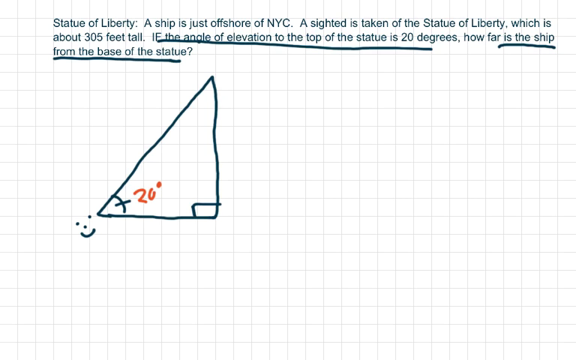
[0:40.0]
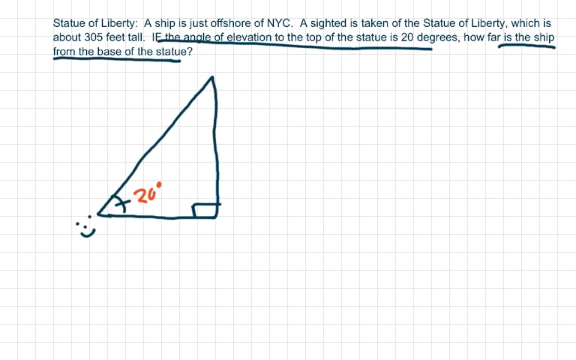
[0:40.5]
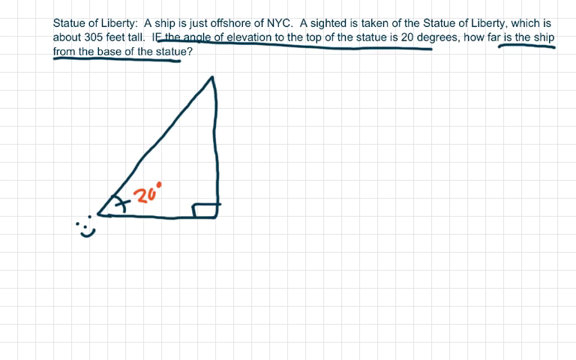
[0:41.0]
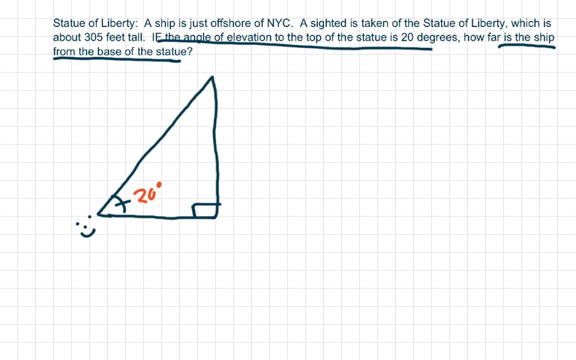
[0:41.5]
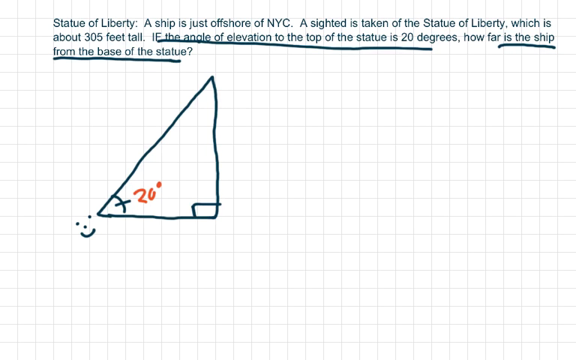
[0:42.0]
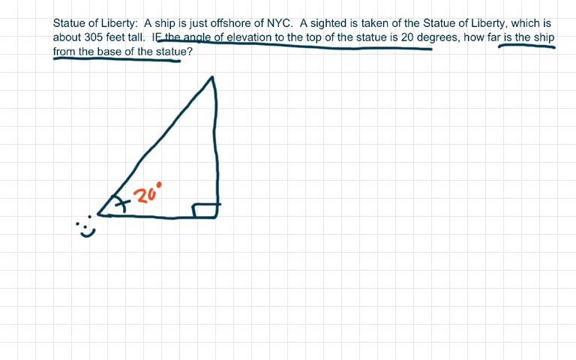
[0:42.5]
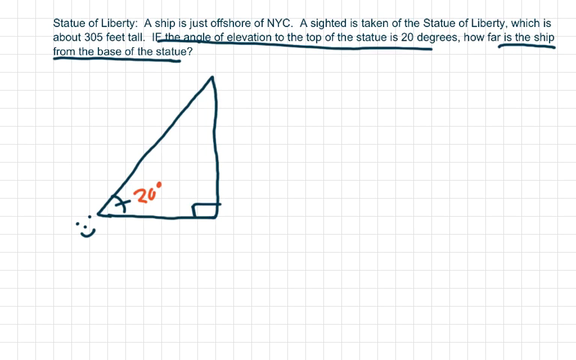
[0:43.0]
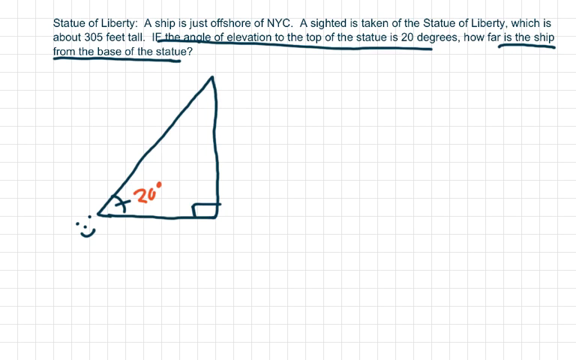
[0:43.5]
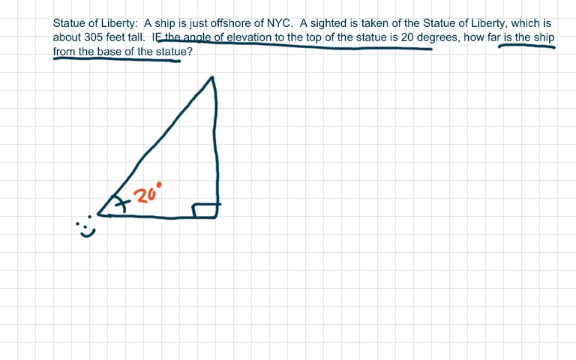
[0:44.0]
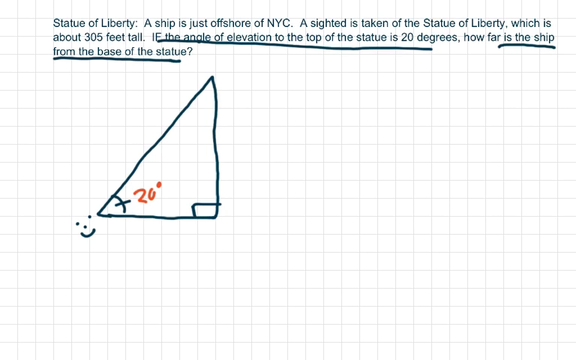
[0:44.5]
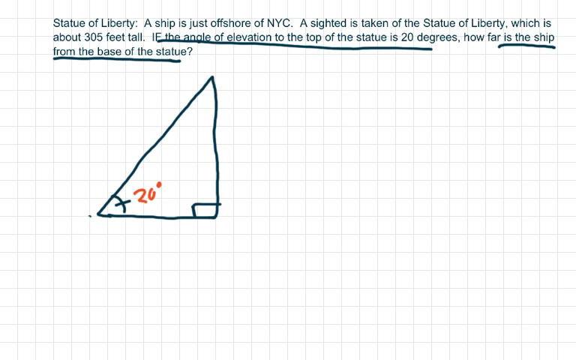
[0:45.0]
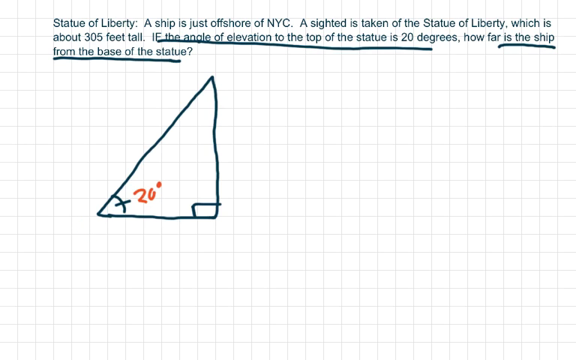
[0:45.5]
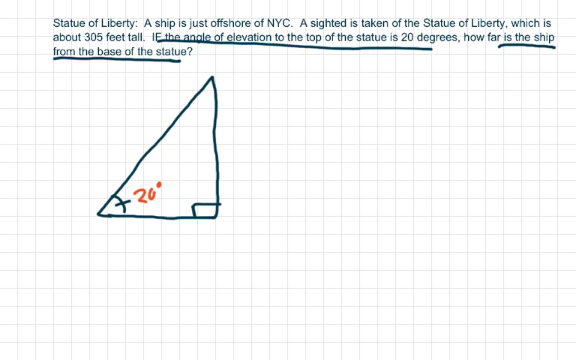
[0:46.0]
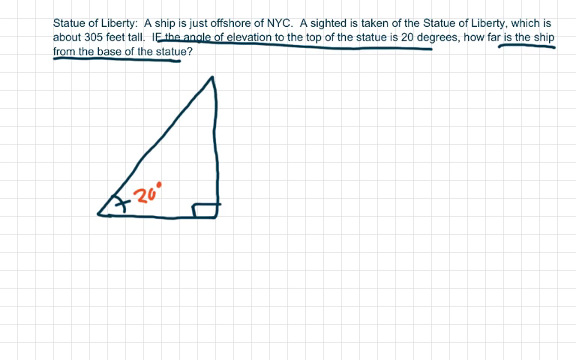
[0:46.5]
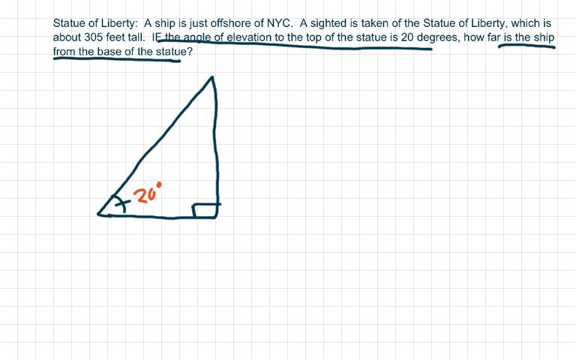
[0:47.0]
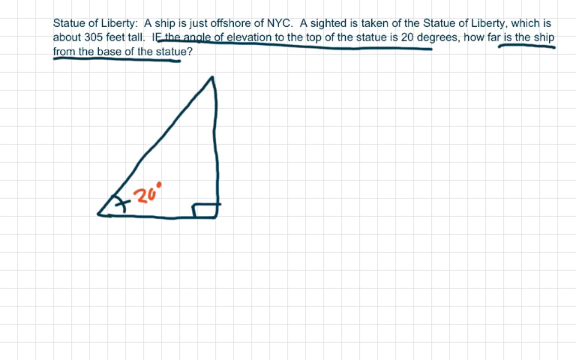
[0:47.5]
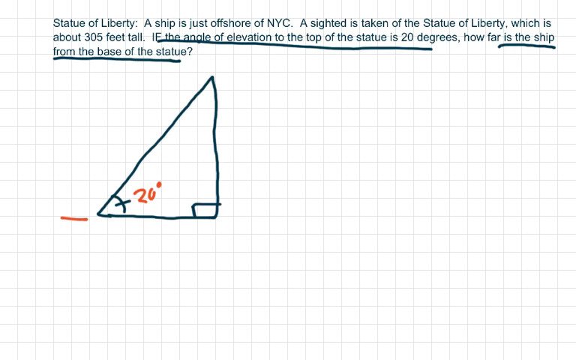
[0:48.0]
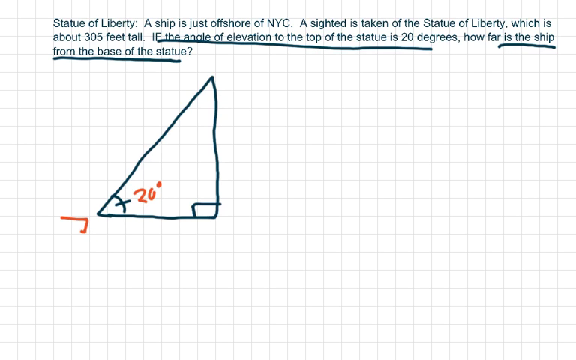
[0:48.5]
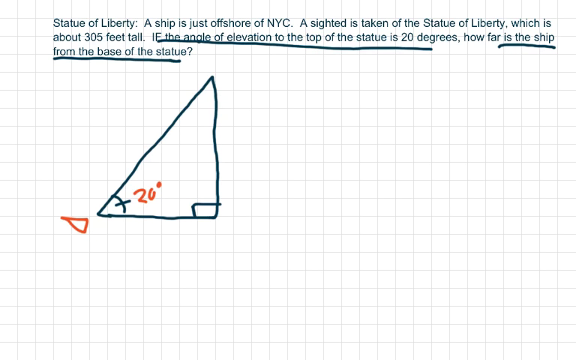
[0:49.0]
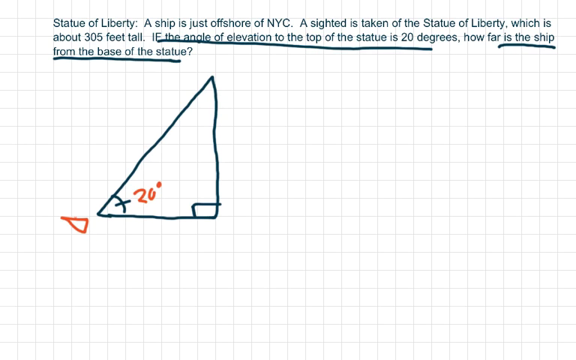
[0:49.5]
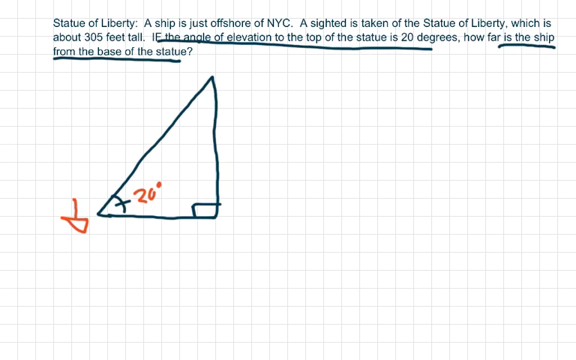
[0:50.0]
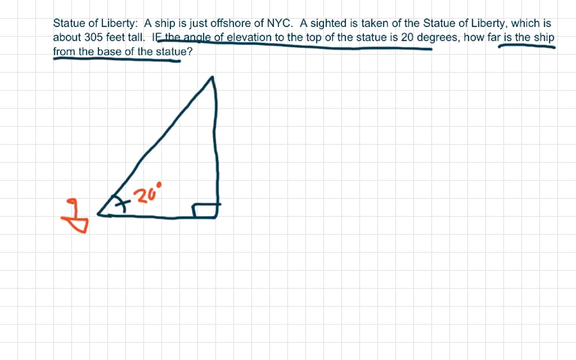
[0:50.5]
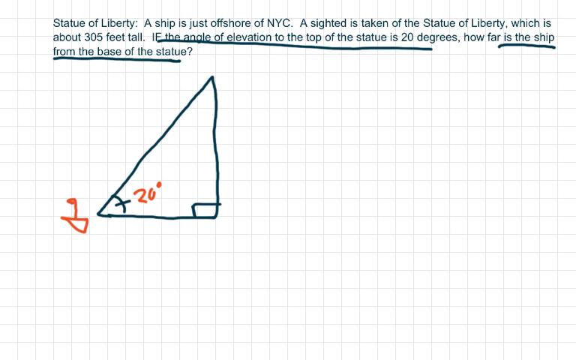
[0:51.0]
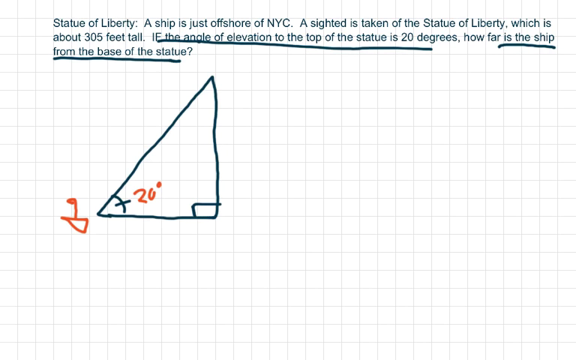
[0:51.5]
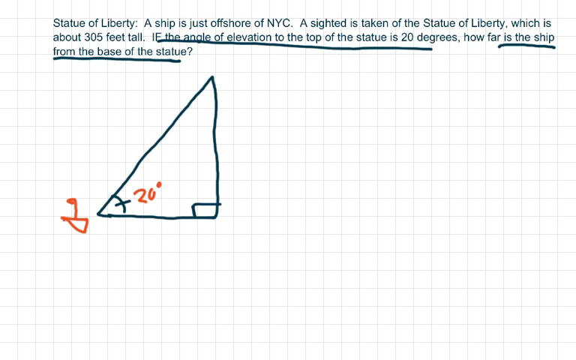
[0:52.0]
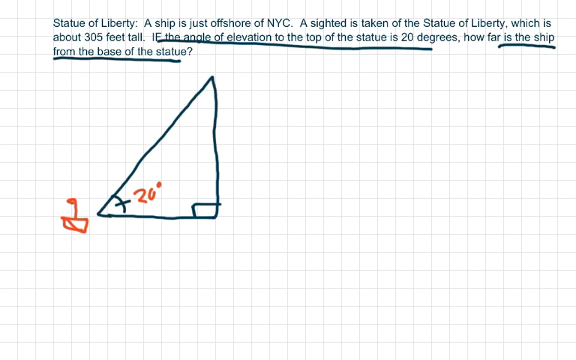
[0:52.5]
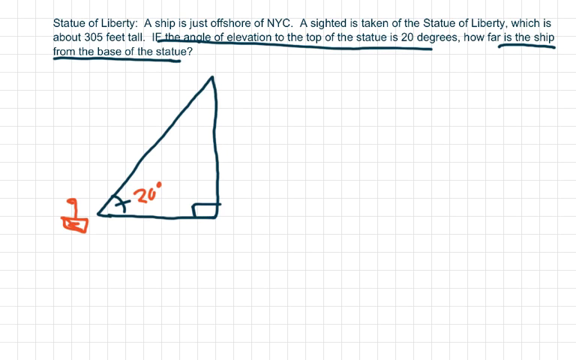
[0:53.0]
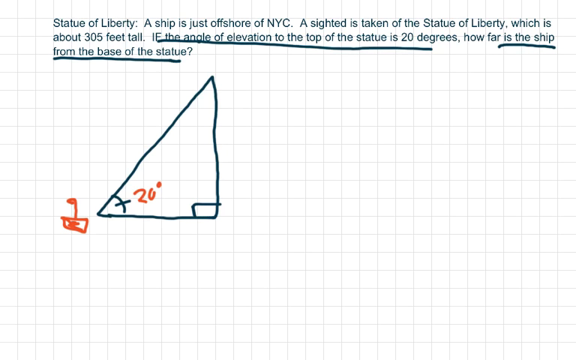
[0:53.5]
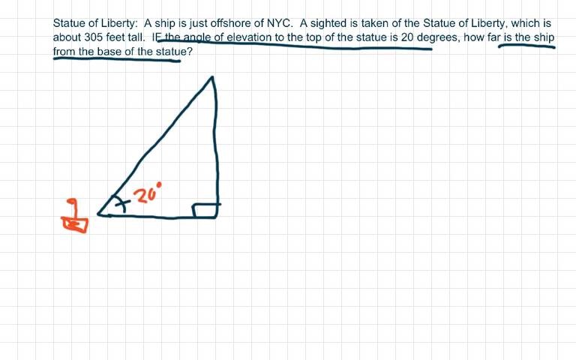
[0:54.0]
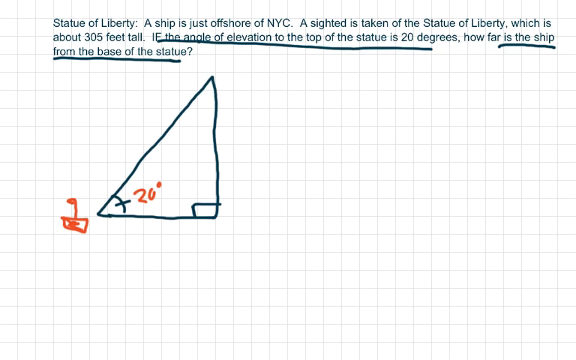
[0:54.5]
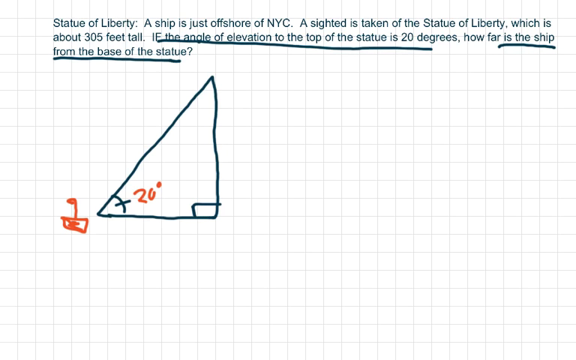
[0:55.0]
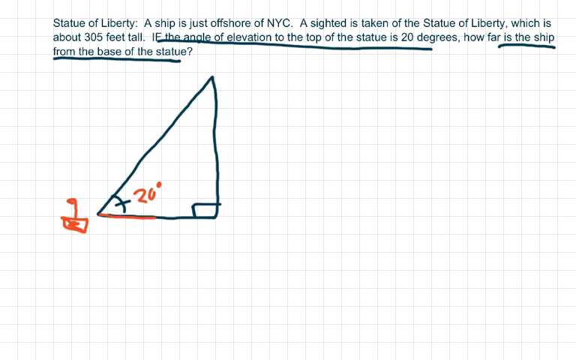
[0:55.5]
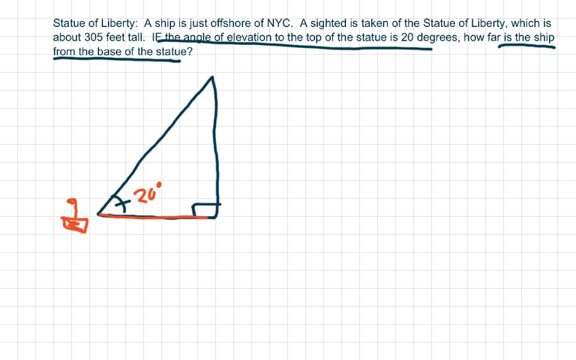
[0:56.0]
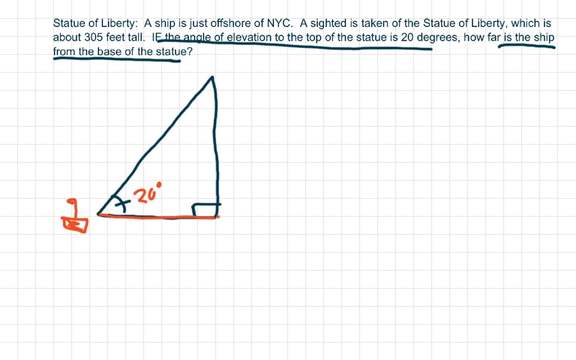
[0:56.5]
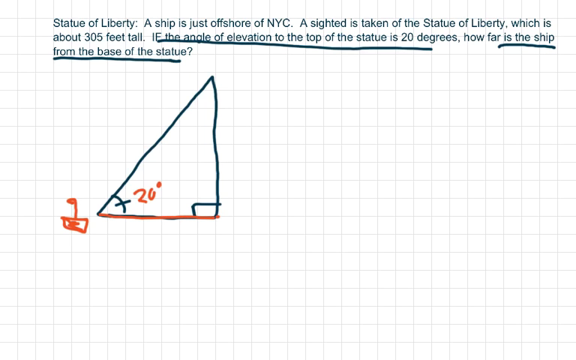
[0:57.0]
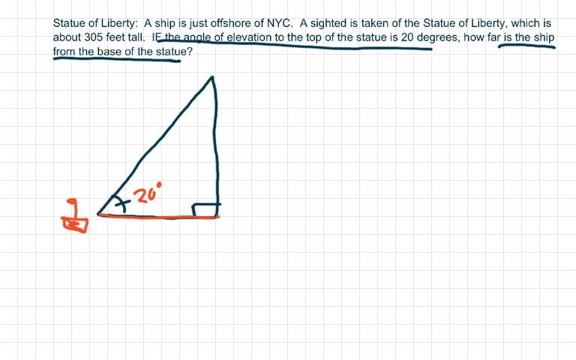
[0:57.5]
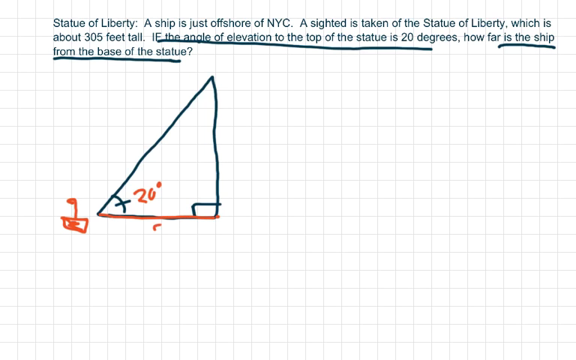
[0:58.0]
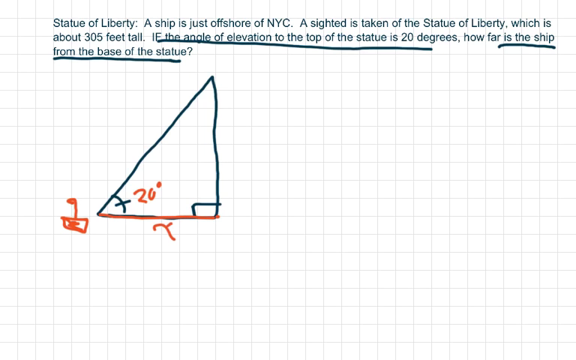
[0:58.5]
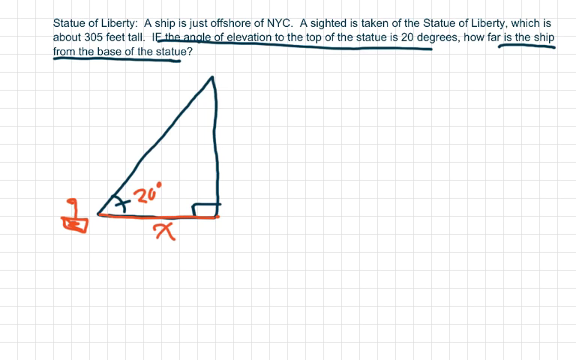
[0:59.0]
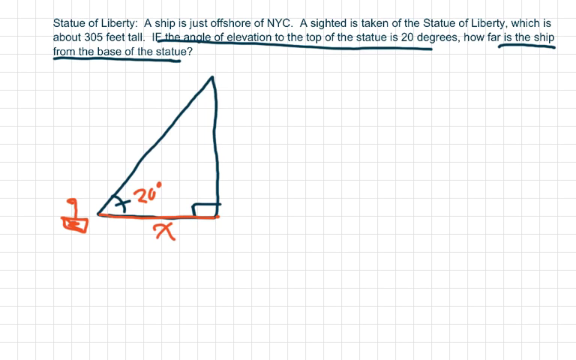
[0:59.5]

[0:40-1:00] A white background with small lines forming small squares looks like graphing paper. At the top, in dark green text, the word problem reads "Statue of Liberty: A ship is just offshore of NYC. A sighted is taken of the Statue of Liberty, which is about 305 feet tall. If the angle of elevation to the top of the statue is 20 degrees, how far is the ship from the base of the statue?" The text "if the angle of elevation to the top of the statue is 20 degrees" is underlined with a dark green line, and "is the ship from the base of the statue" is also underlined with a dark green line. Underneath is a triangle drawn with dark green lines. The bottom right angle has a small square in it indicating a 90 degree angle. The bottom left angle has a curved line with a dash in it indicating an acute angle, and "20 degrees" is written in red numbers next to the dashed line. The top angle is also acute. Outside the triangle's bottom left angle is a smiley face drawn with two dots for eyes, one dot for a nose, and a curved line for a mouth. The smiley face then disappears, and a simple sailboat is drawn with what looks like a red marker. The bottom line of the triangle is then traced with a red line, and a red X is written underneath it.